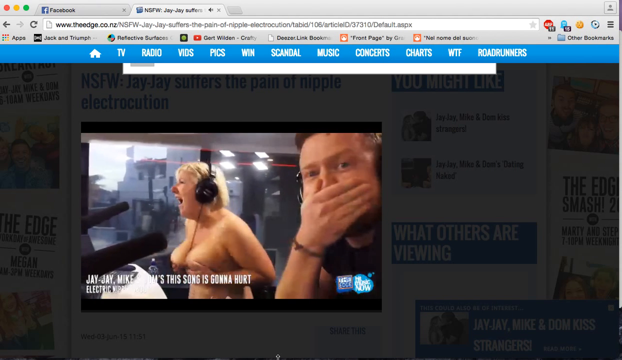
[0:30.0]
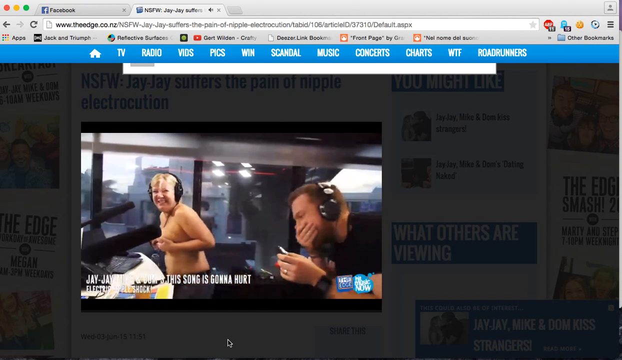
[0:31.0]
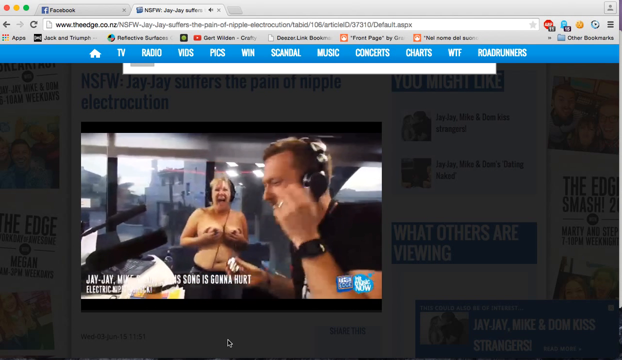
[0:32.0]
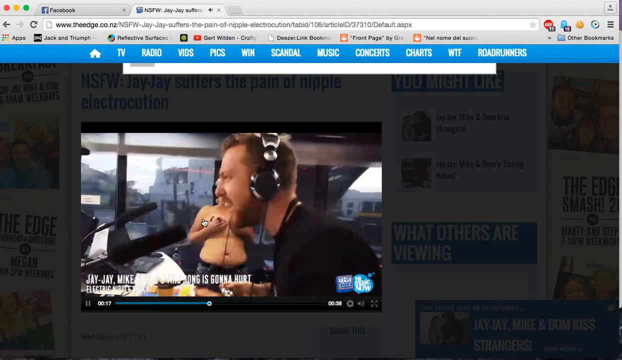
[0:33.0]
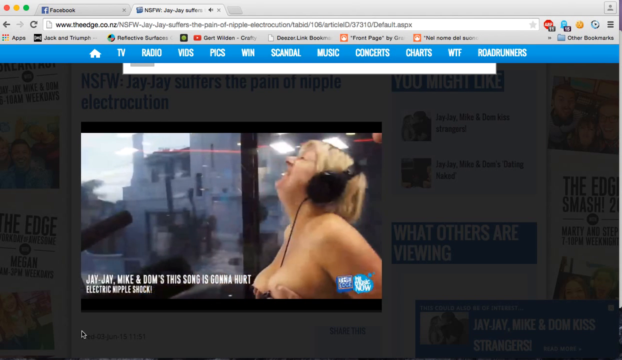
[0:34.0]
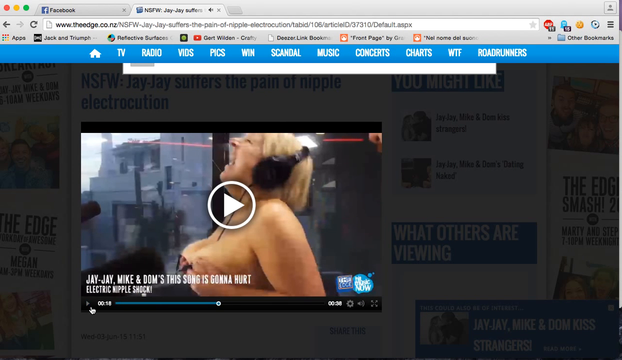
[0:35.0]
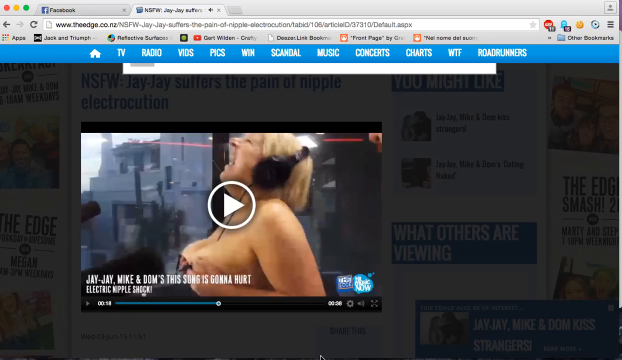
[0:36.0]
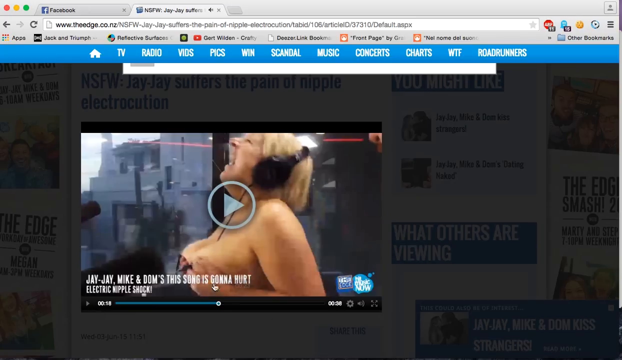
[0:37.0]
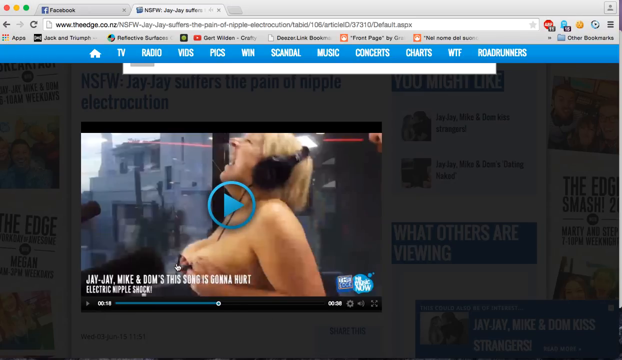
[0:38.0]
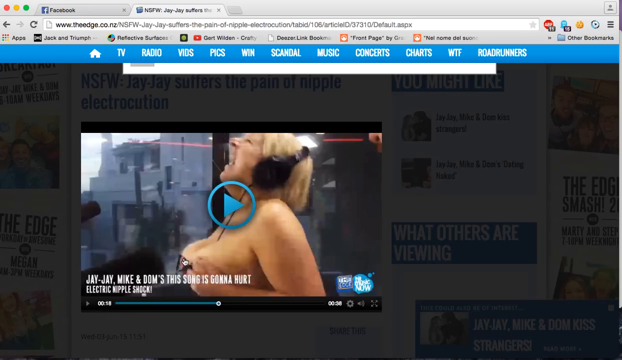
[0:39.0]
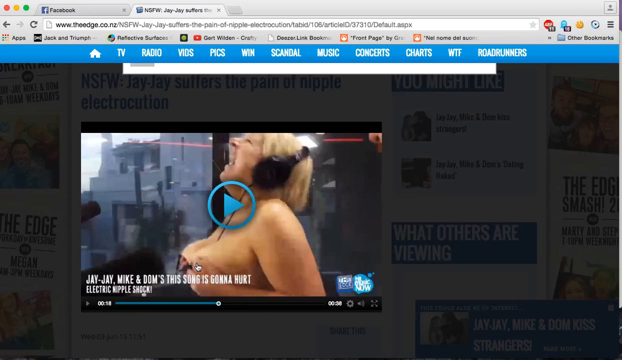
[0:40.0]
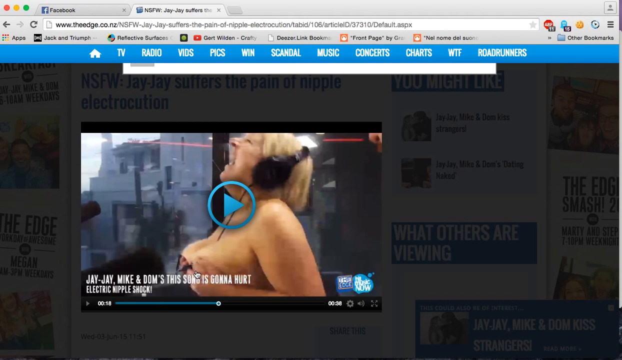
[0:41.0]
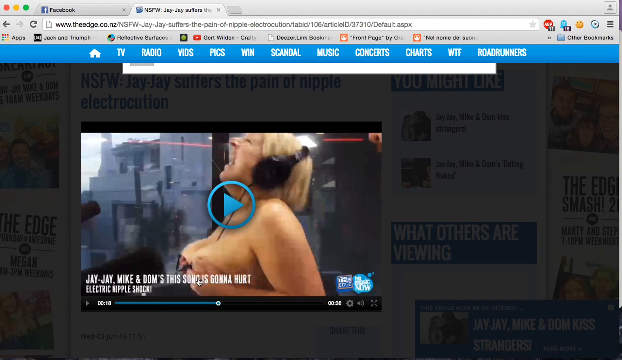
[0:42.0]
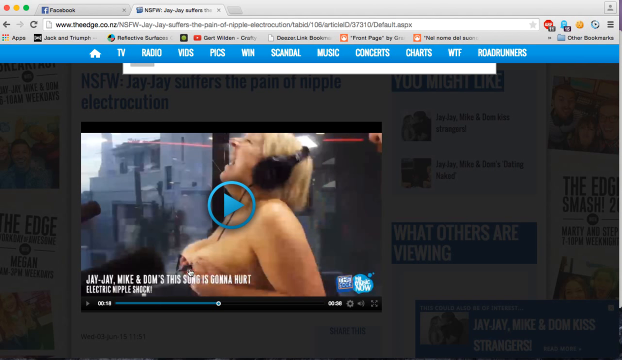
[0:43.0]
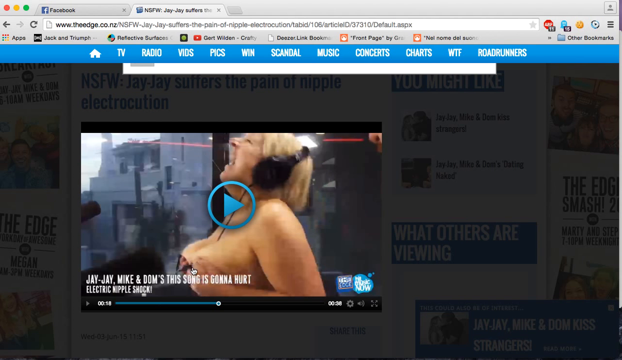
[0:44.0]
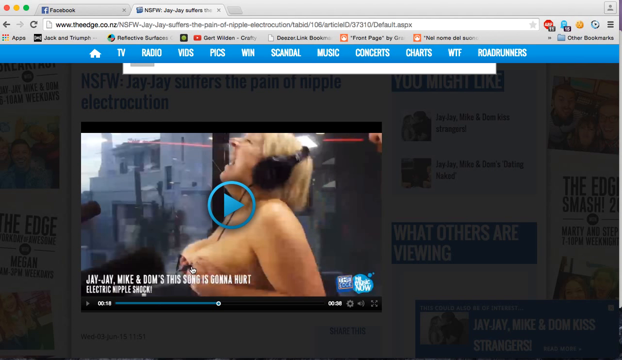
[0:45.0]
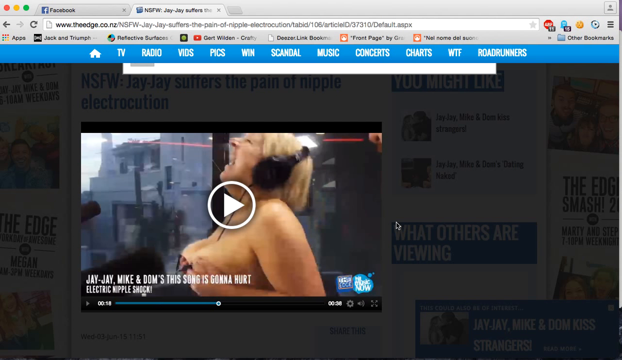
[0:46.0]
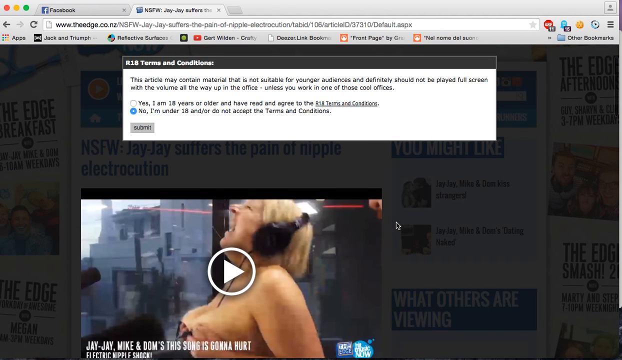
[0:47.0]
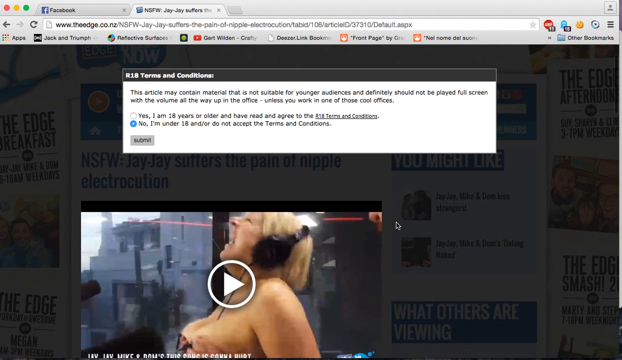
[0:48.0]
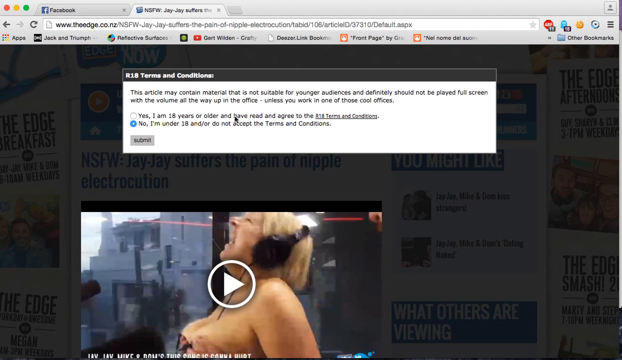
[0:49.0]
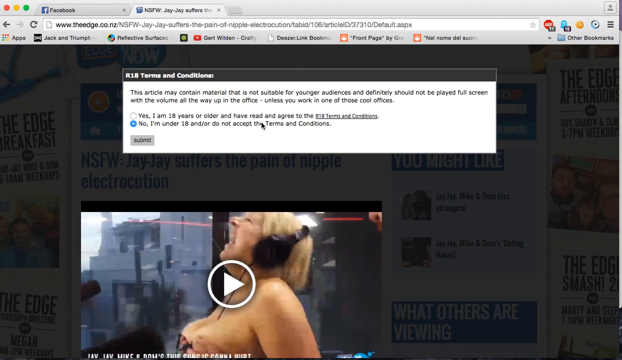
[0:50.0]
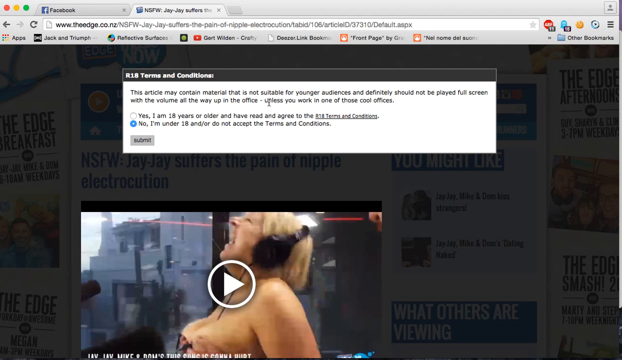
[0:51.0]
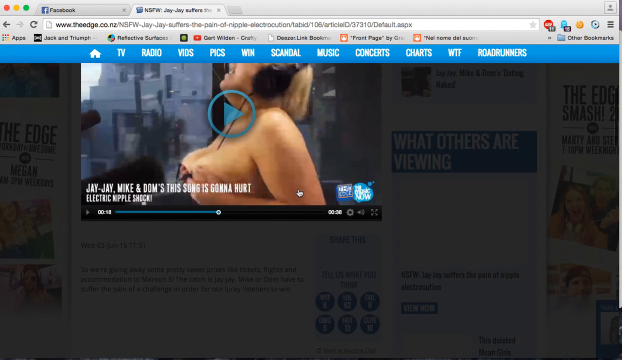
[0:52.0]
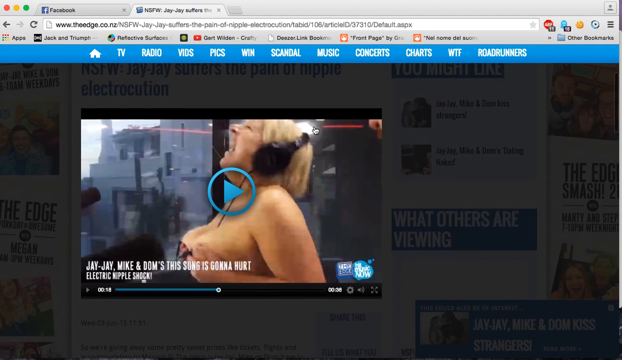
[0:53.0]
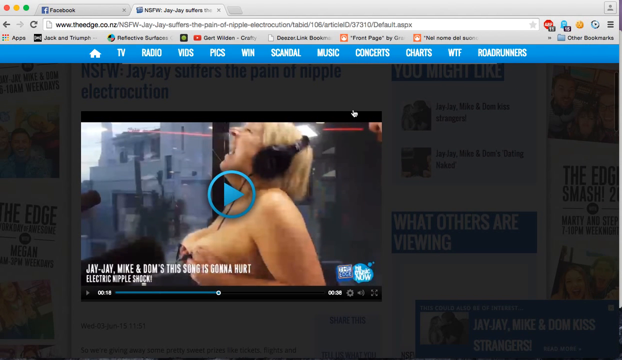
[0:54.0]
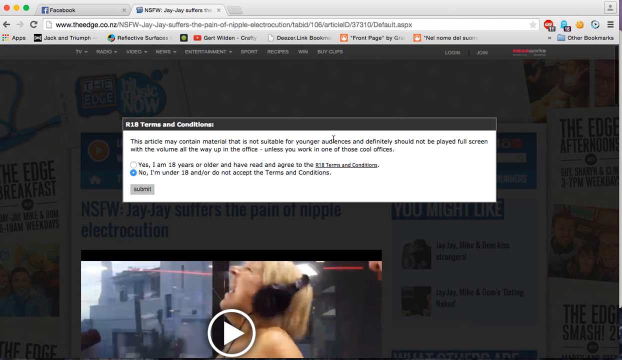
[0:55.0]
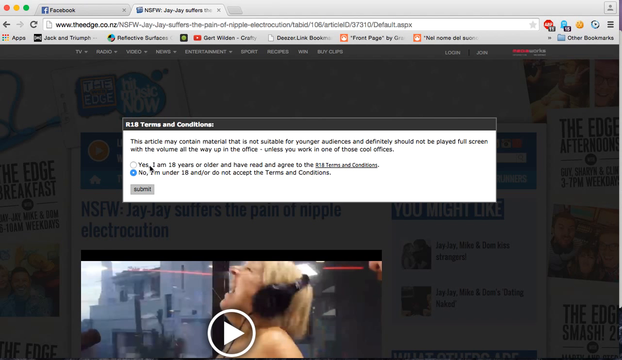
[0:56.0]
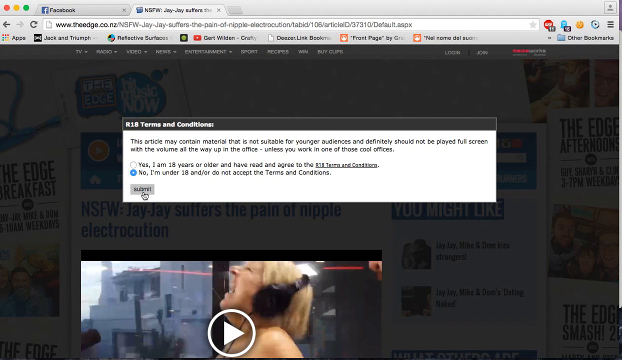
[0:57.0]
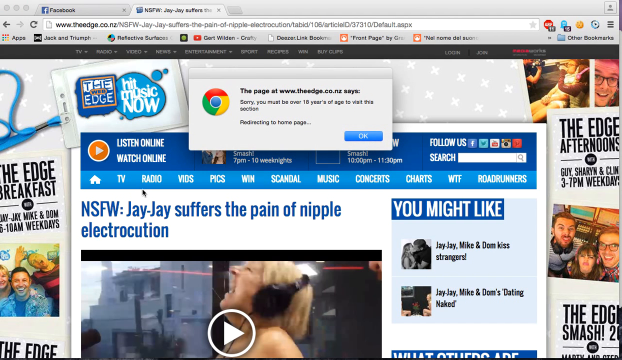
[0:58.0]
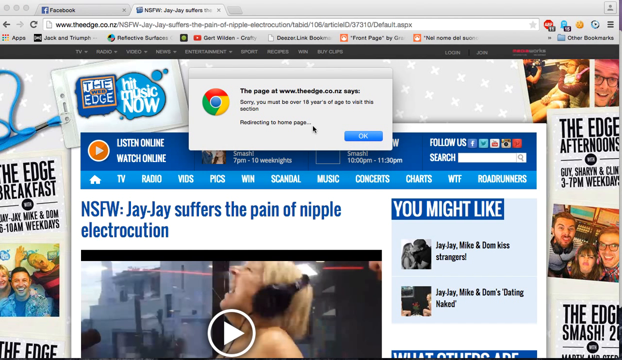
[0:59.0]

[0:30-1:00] A shirtless woman in a music studio covers her breasts with her hands while wearing a headset and attempting to sing. Electric probes are attached to her breasts at the nipples and connected to a device held in the hand of a man who is also in the studio. As she sings, the man activates the probes, delivering a shock to the singer, and she staggers around, laughing. The internet user then pauses the video, scrolls up and down briefly, and mouses over the terms and conditions, which they have not agreed to. They make no selection, leaving the terms and conditions pre-selected as no, and hit submit. A prompt pops up saying they do not have access to the material, and they are returned to the home page. A still version of the video remains visible at the bottom of the screen all the while.